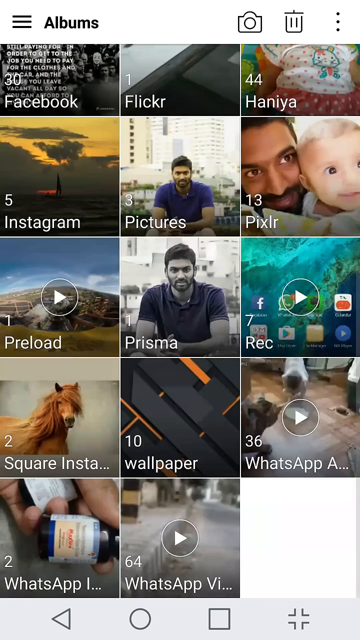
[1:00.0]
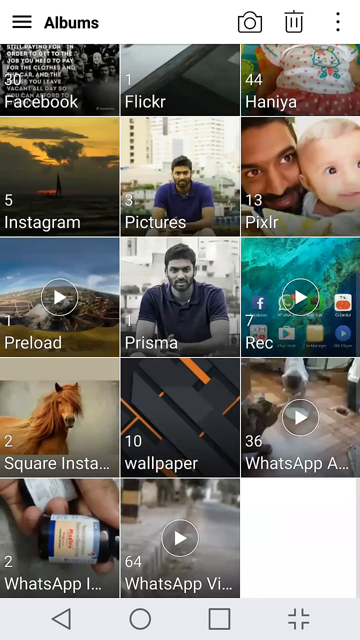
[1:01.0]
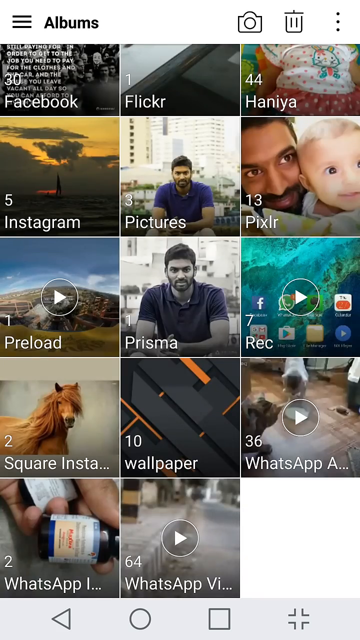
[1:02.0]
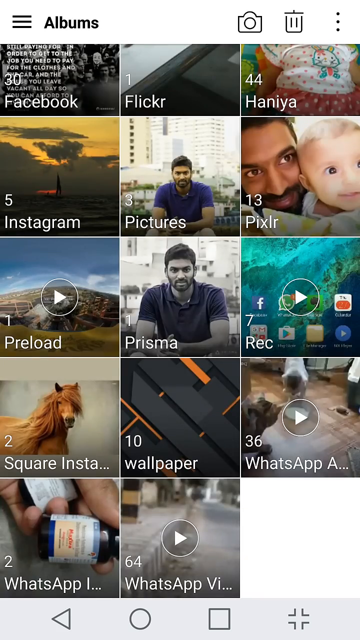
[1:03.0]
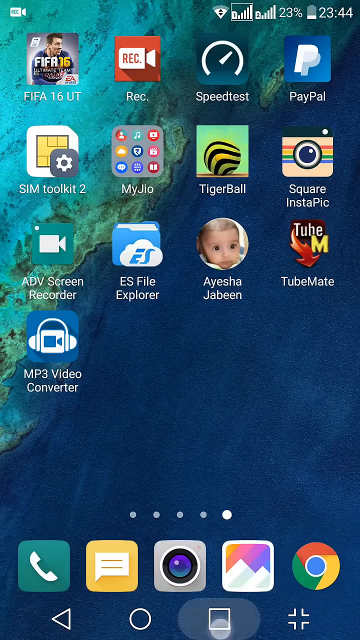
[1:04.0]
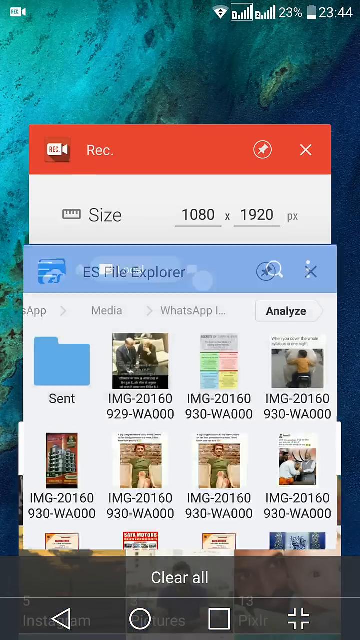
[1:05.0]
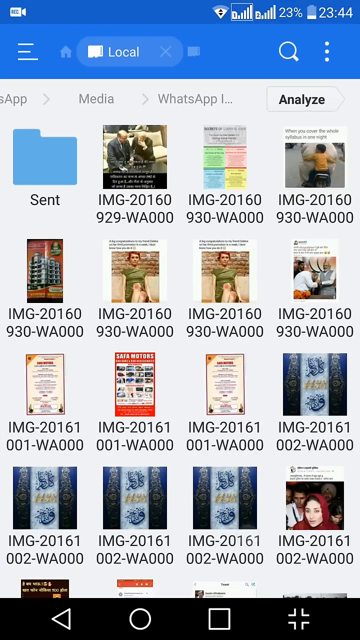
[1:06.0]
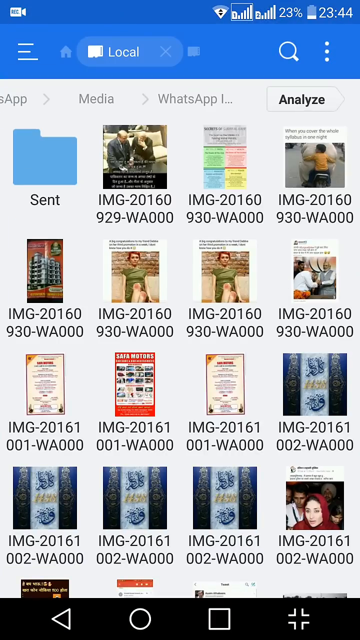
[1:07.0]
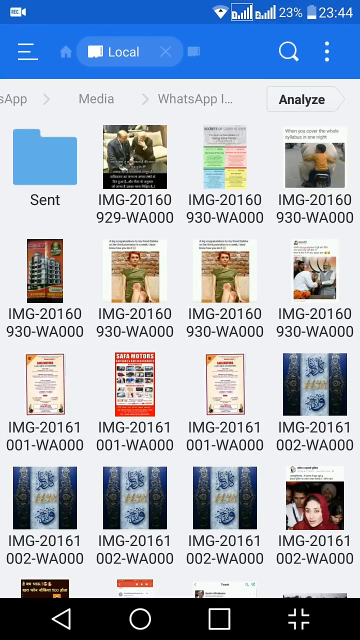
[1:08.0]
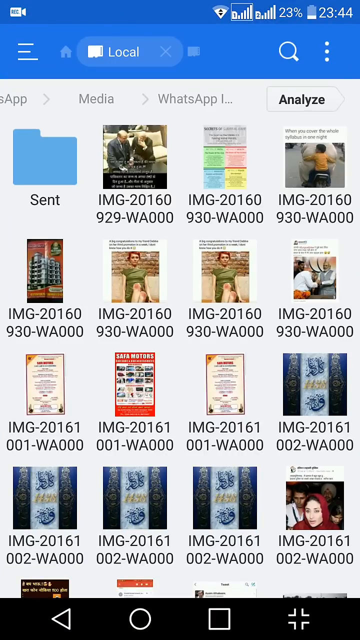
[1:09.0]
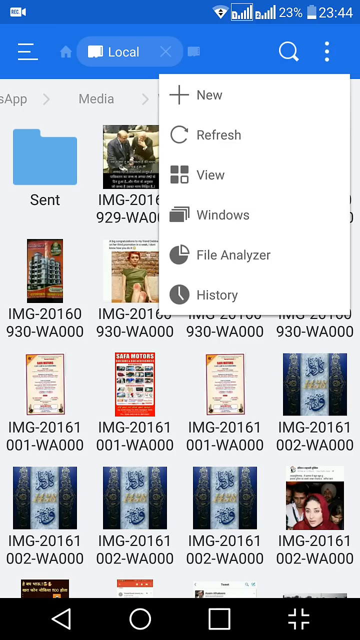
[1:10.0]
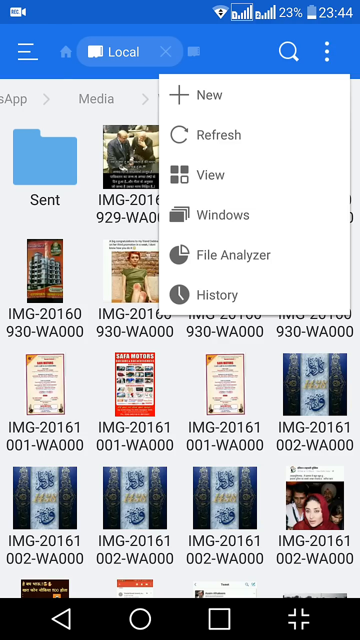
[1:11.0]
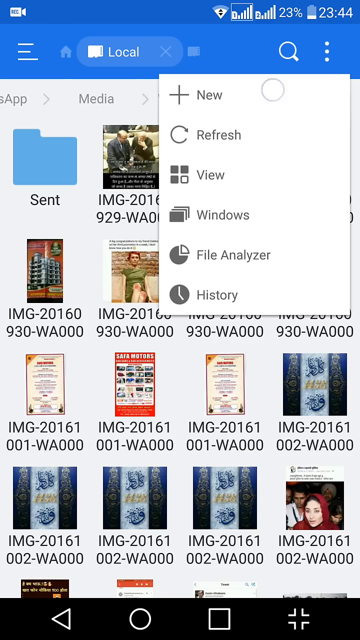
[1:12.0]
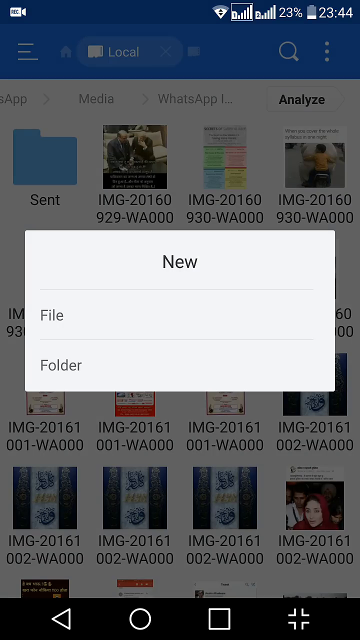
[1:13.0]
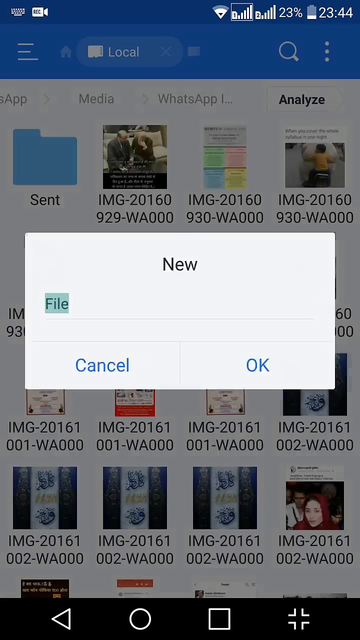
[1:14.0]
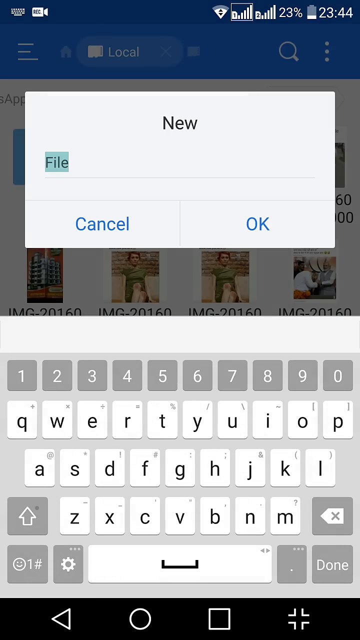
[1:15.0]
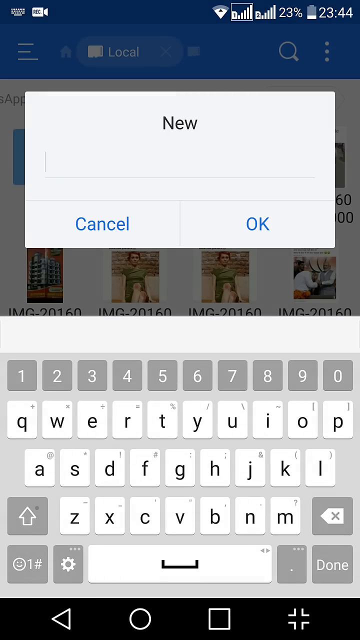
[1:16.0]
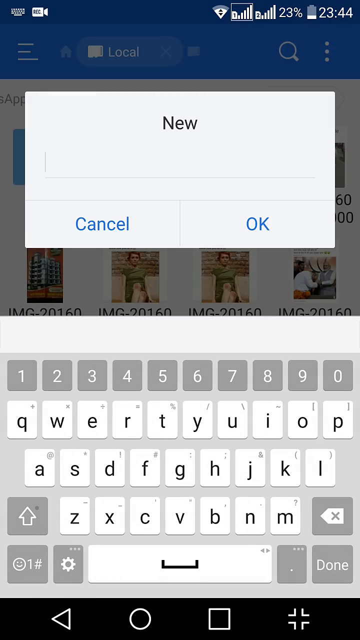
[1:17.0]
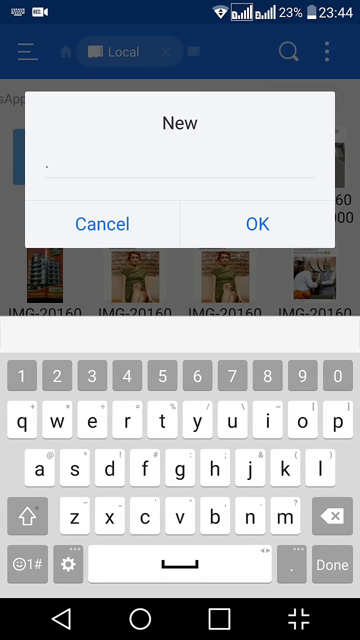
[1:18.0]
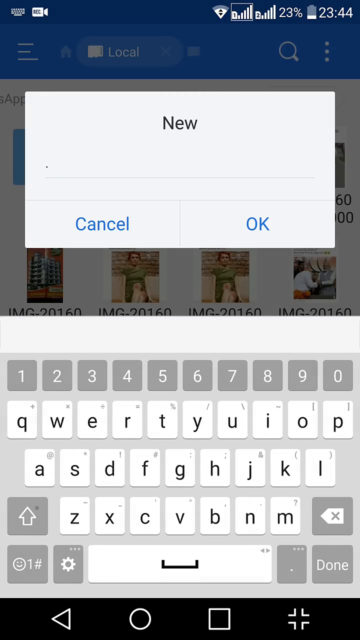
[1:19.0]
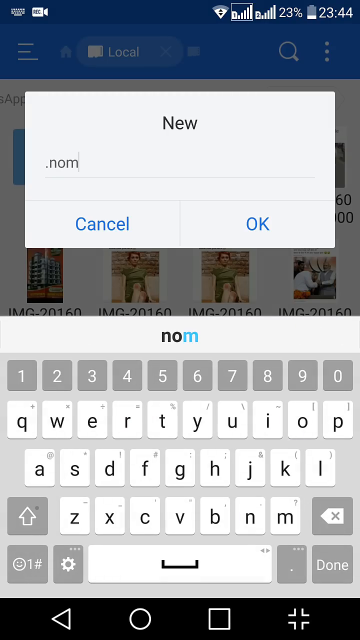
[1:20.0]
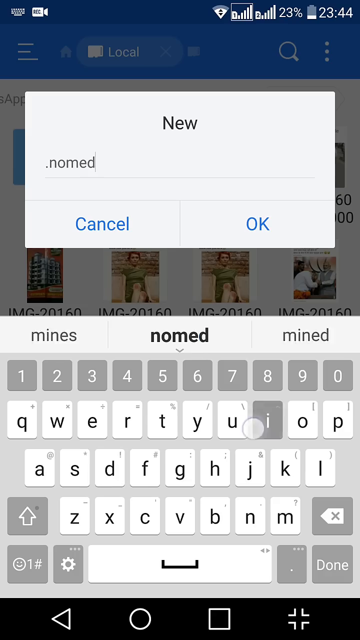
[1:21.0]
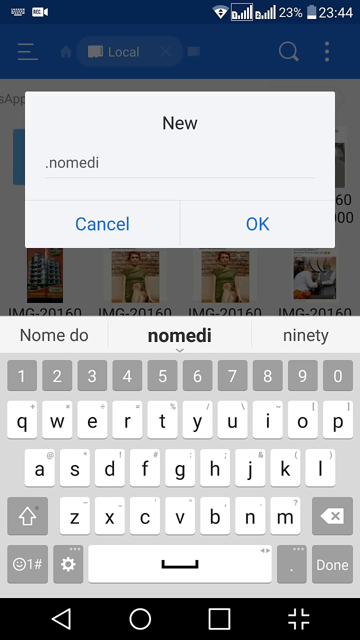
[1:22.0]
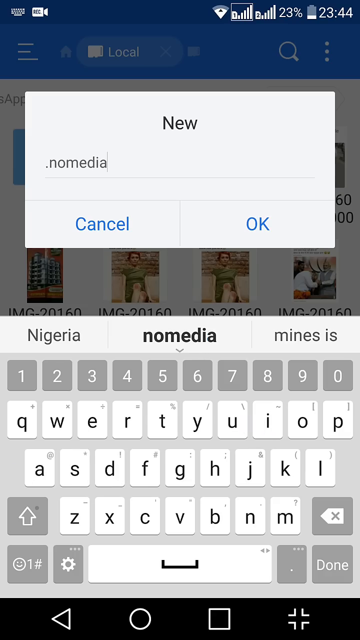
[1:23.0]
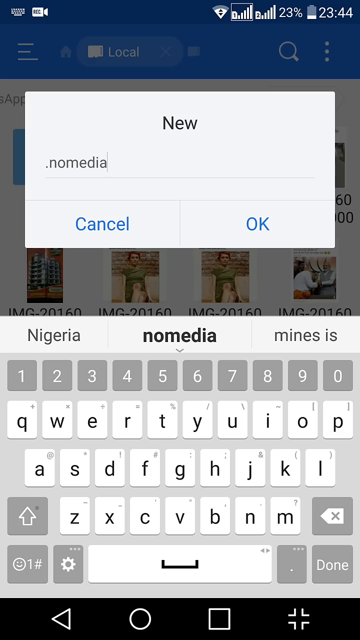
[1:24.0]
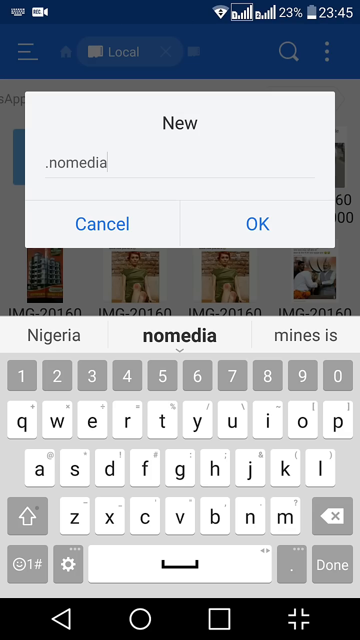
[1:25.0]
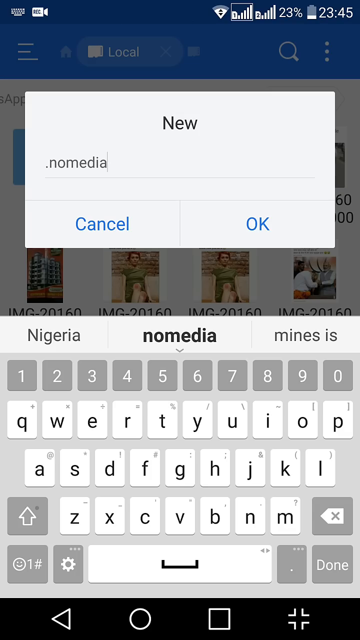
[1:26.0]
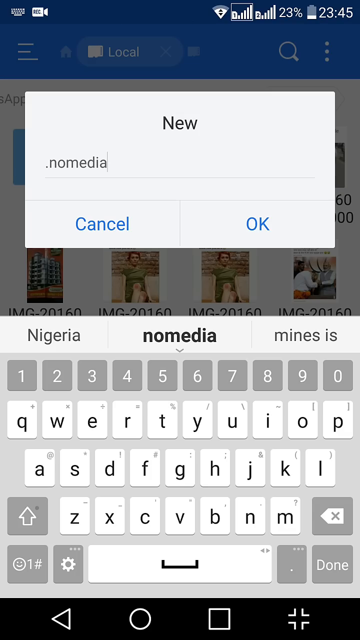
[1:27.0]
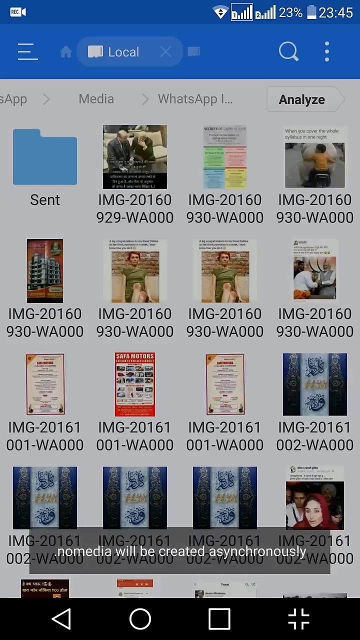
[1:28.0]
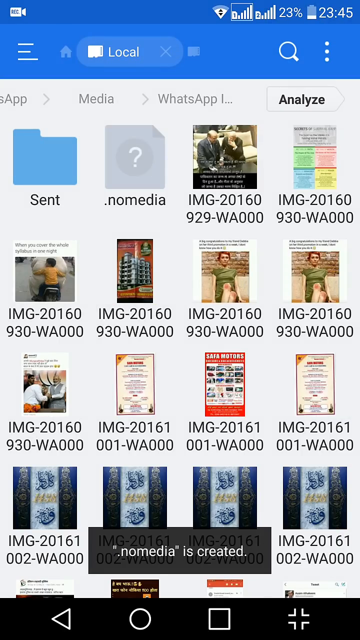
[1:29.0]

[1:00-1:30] A photo album is shown, with a trash can in the right-hand corner. Album labels include Facebook, "Flickr", "Haniya", Instagram with five pictures, and "Pictures" with three, showing a man in a short-sleeved blue shirt facing the camera. Another album, "Pixlr", has 13, showing the same man with a baby on the right side of the image. WhatsApp appears at the bottom. The person exits, clicks another button, then clicks "new" to create a new file, naming it "nomedia".